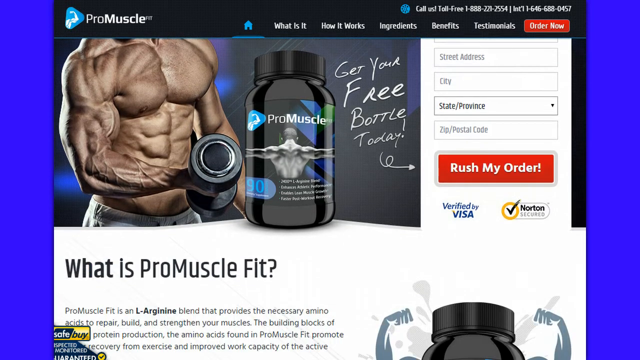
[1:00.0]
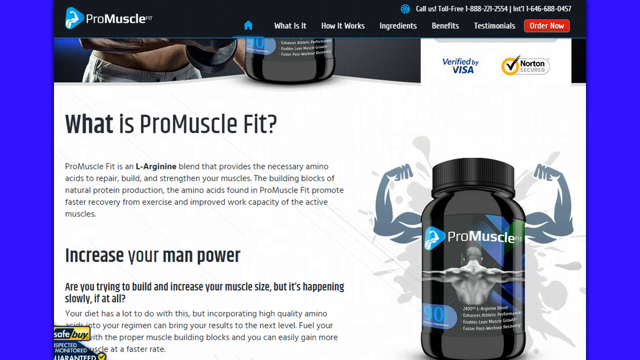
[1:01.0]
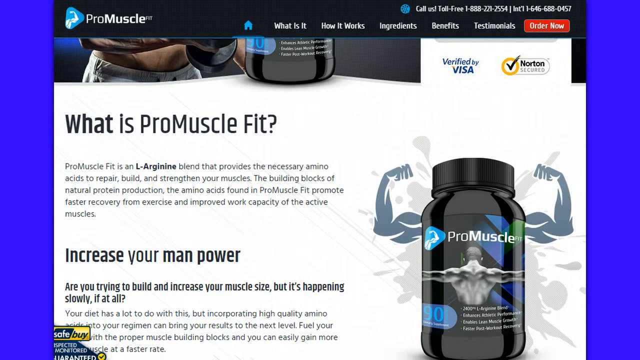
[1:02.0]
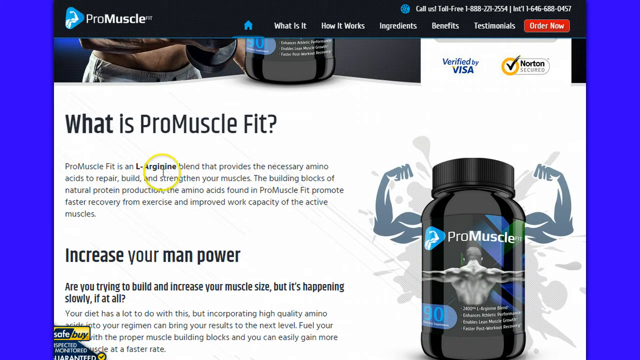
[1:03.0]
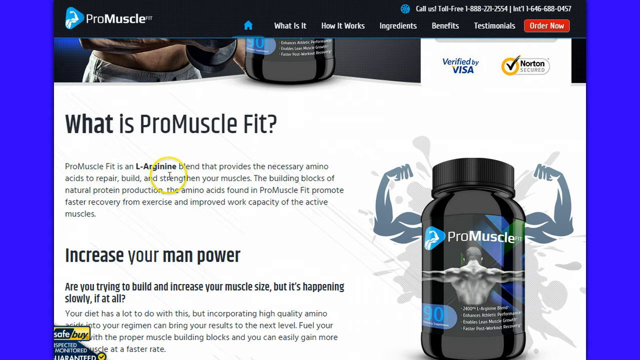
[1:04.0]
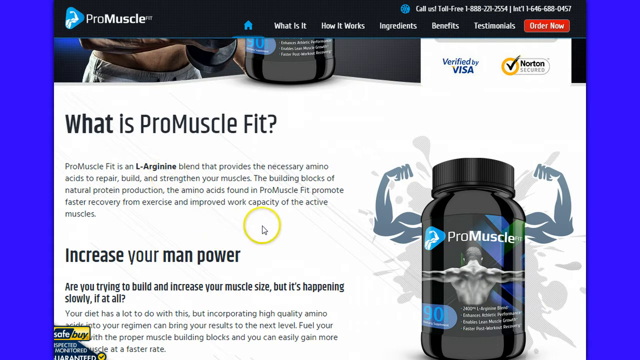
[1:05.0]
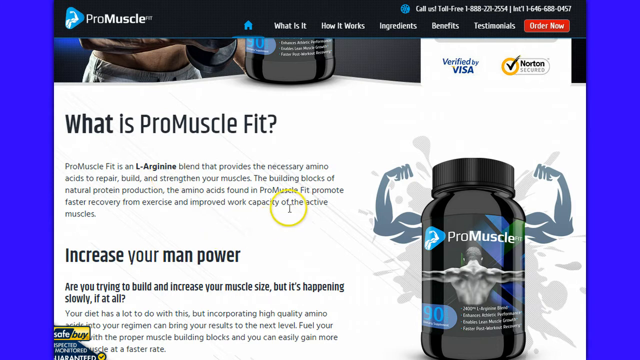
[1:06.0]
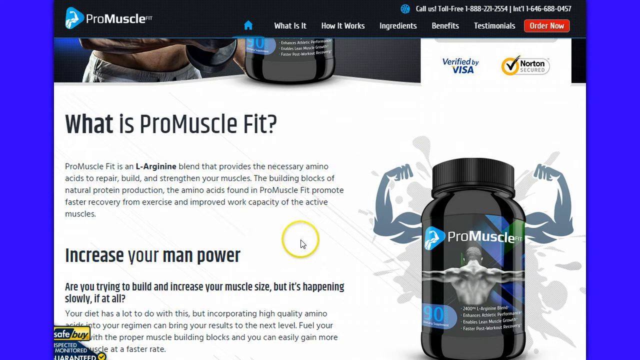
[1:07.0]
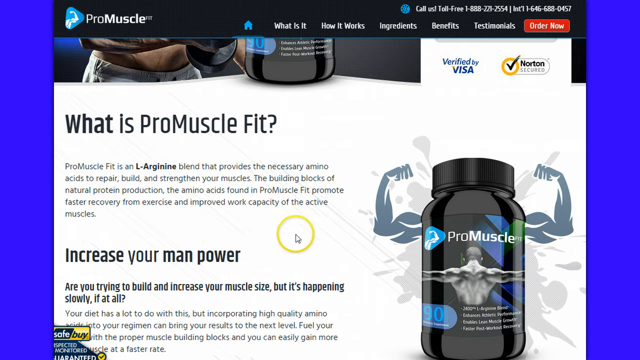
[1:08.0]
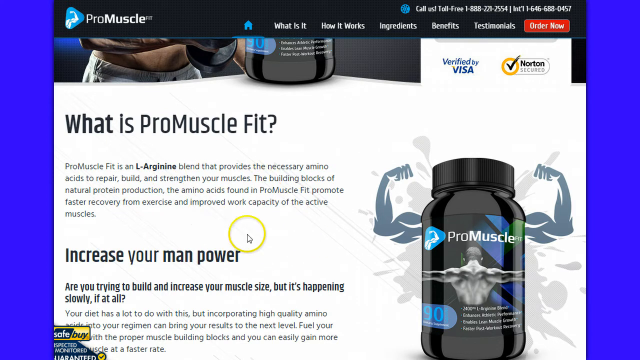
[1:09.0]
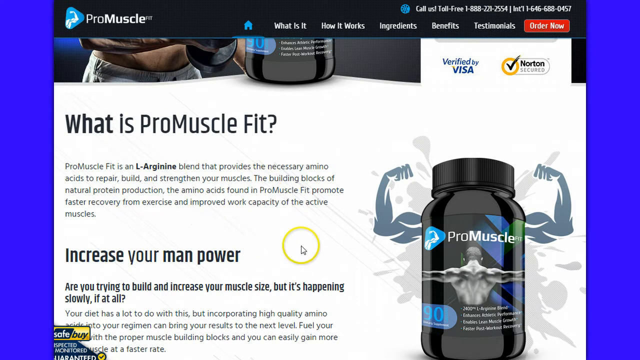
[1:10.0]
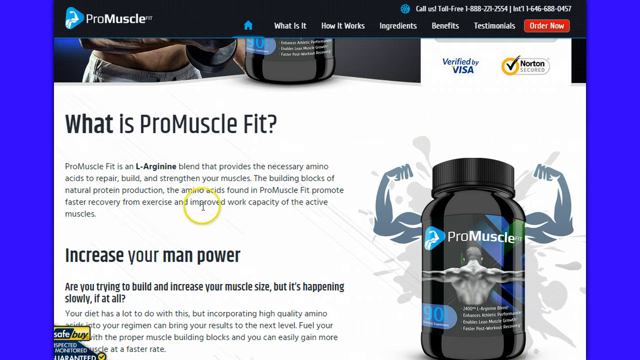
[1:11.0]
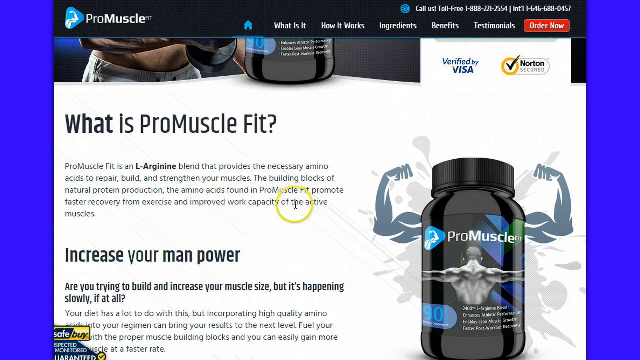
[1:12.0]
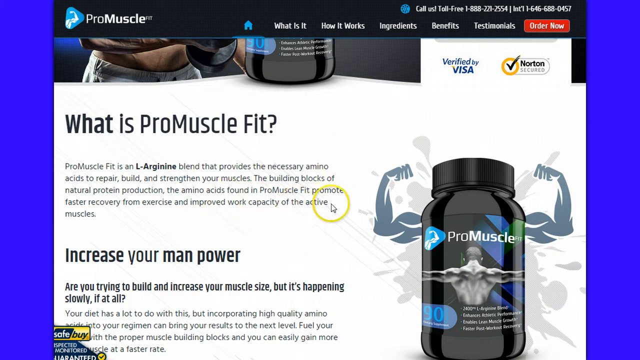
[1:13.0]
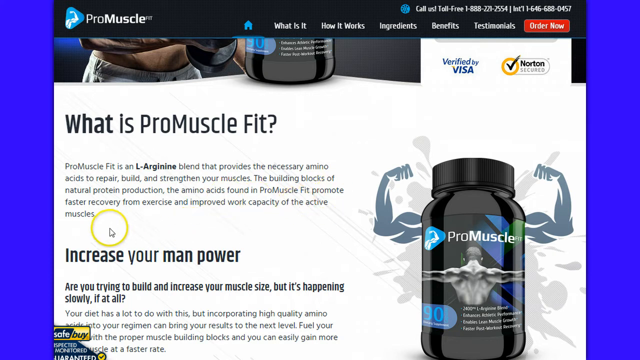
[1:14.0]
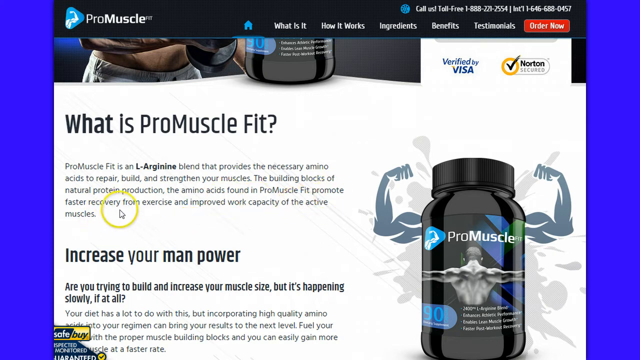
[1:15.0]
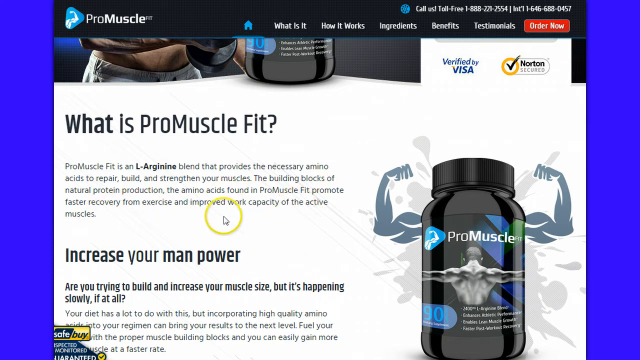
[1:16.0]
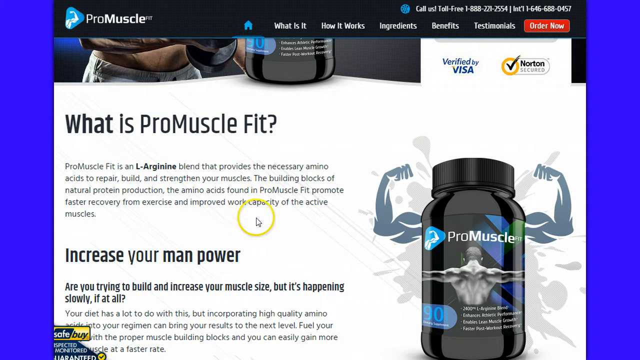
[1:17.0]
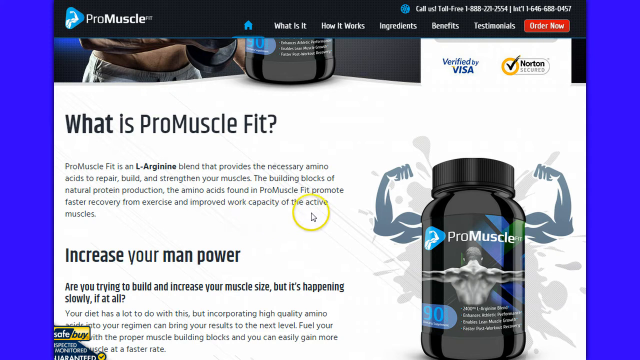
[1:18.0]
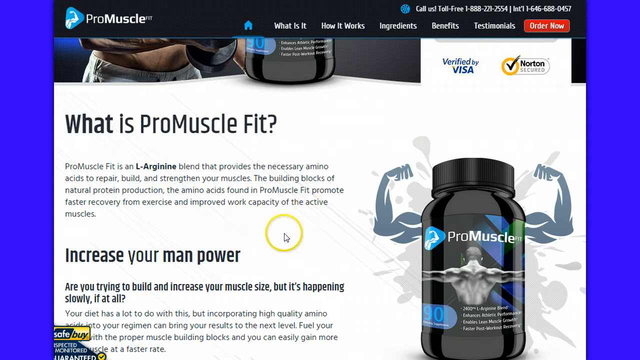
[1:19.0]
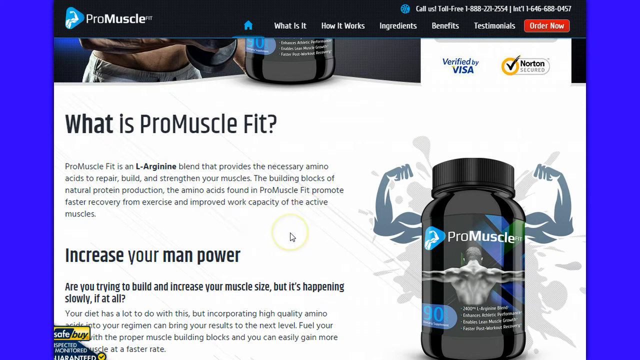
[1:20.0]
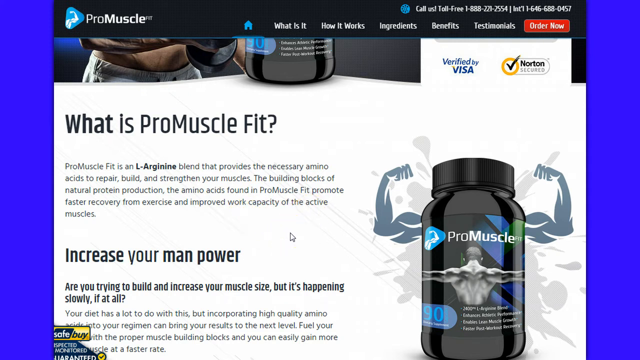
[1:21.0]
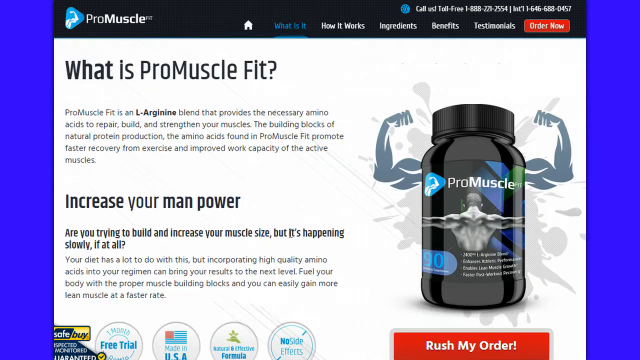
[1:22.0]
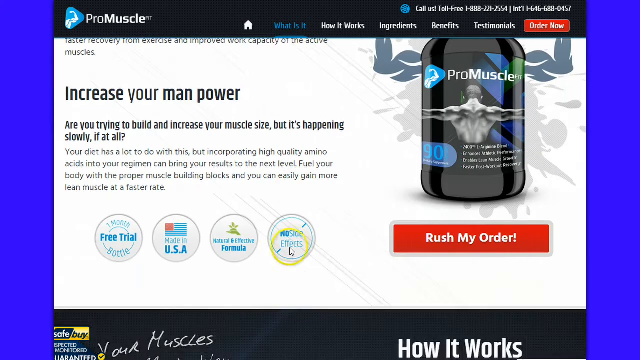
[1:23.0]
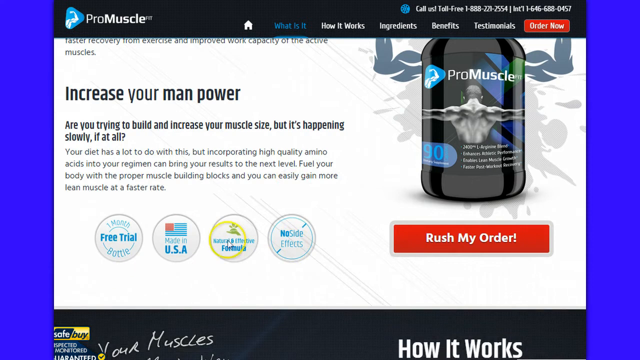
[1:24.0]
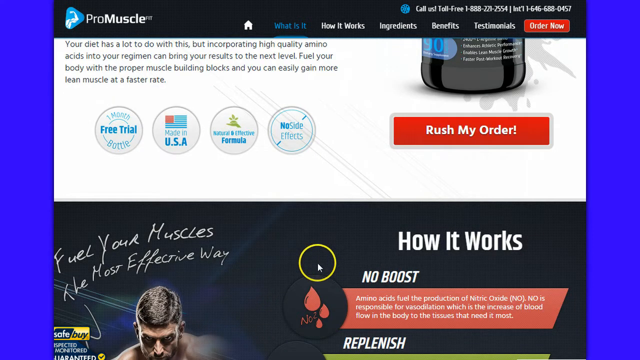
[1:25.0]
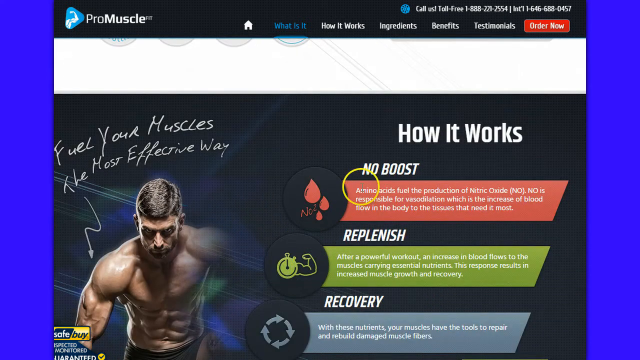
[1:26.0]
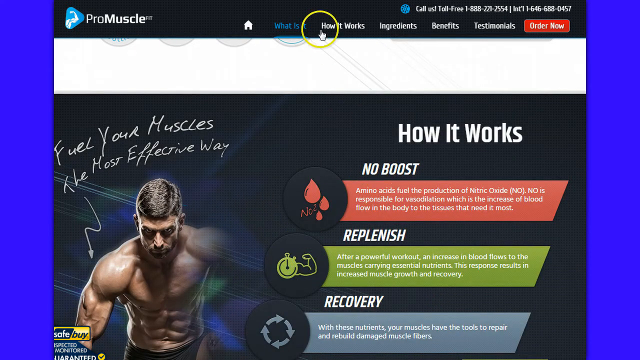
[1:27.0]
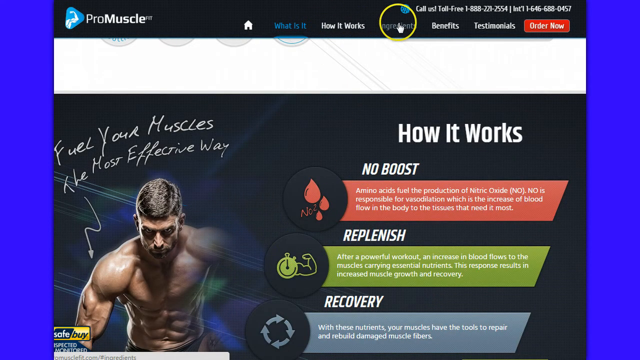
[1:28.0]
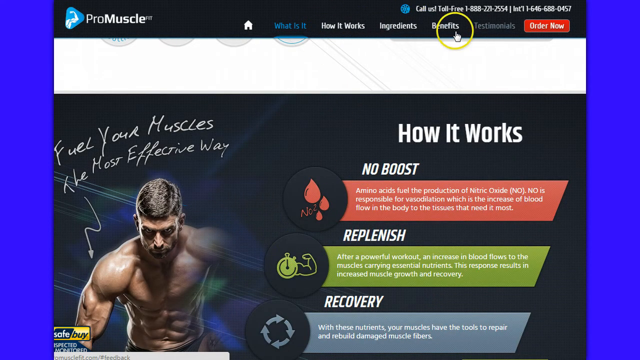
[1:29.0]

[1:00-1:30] An ad page is open on a computer screen with blue edges. In the middle is a bottle of something called Pro Muscle that is being sold, and the page reads "What is Pro Muscle Fit?" The page scrolls down. The cursor is a white circle lined with yellow, and it moves to a paragraph stating that Pro Muscle Fit is L-Arginine and a blend. Four certifications appear at the bottom. A spot is then clicked that leads to a "how it works" section, where the product looks like some pills to take, or possibly protein powder.